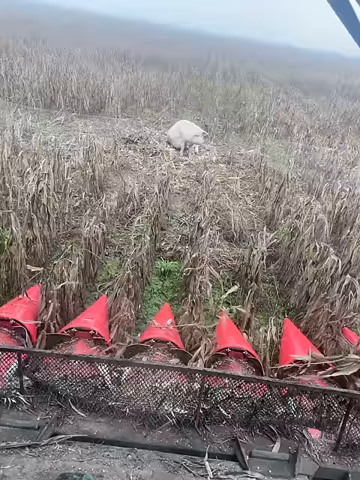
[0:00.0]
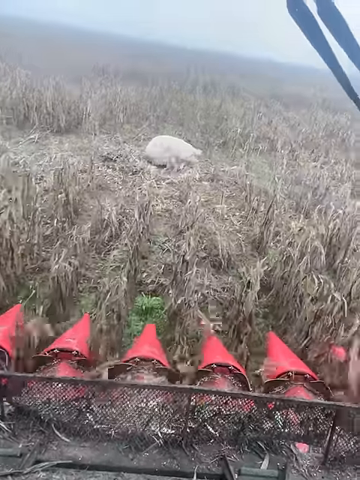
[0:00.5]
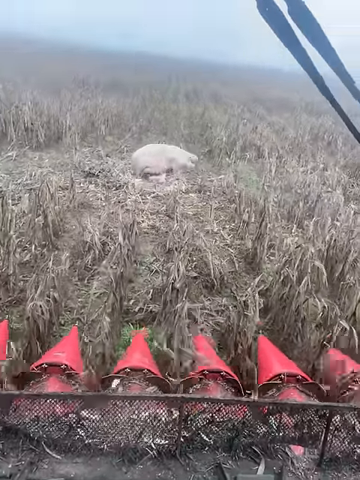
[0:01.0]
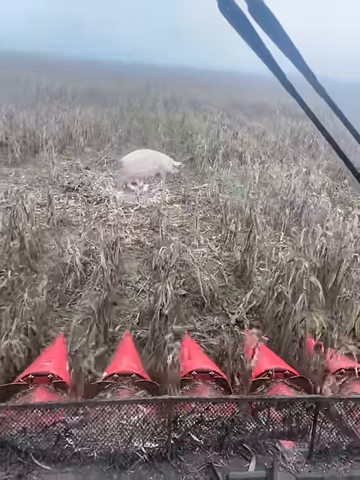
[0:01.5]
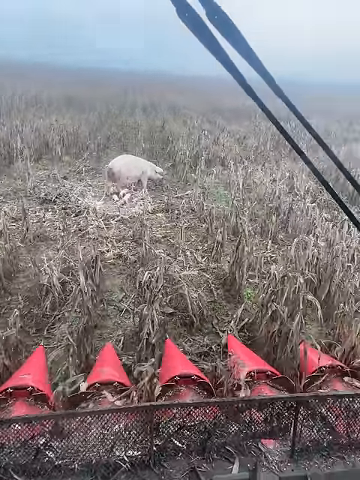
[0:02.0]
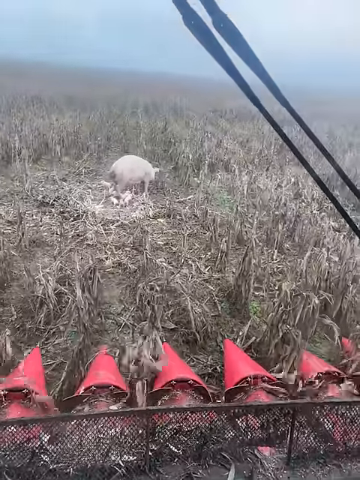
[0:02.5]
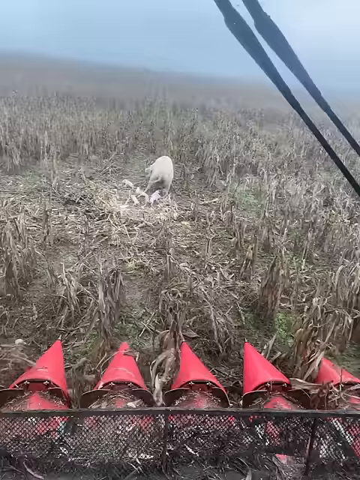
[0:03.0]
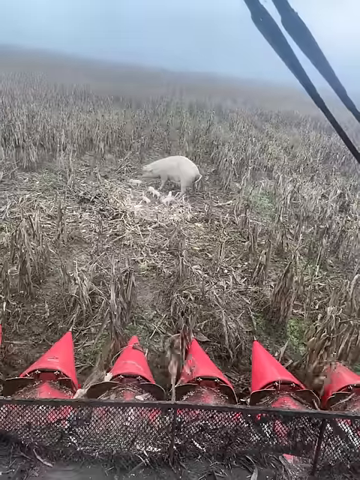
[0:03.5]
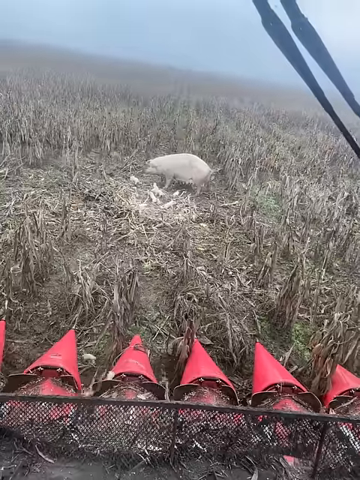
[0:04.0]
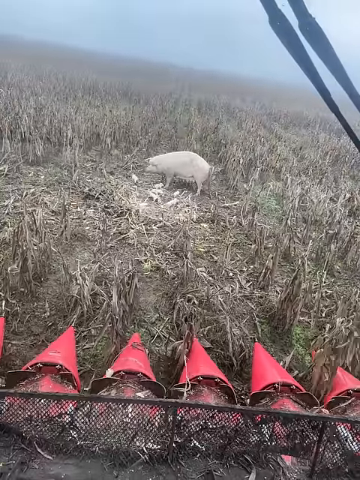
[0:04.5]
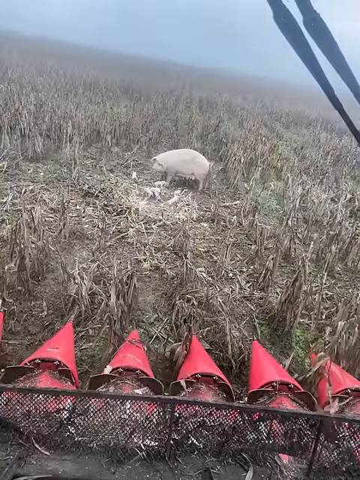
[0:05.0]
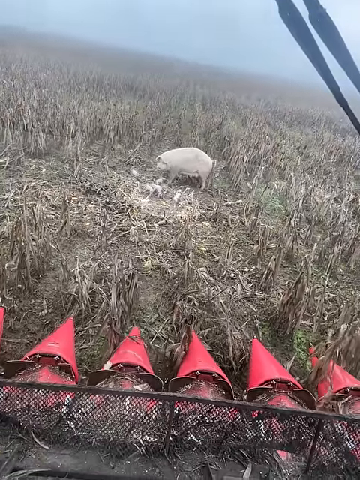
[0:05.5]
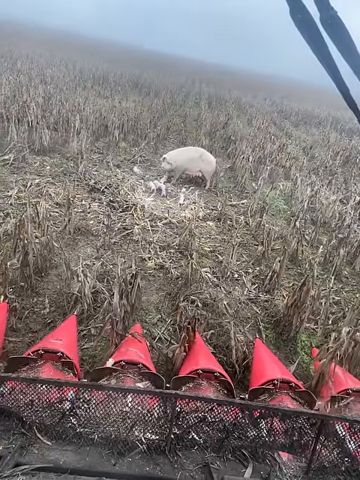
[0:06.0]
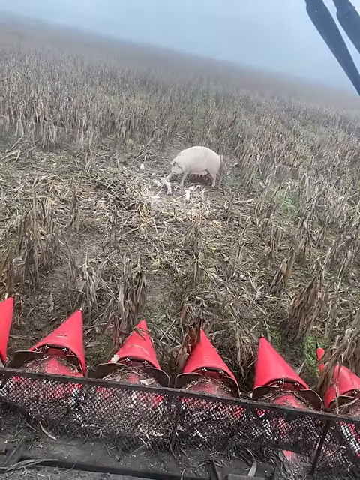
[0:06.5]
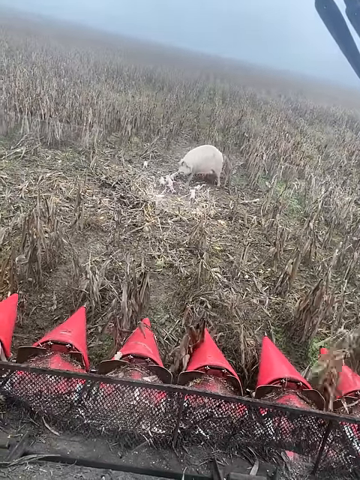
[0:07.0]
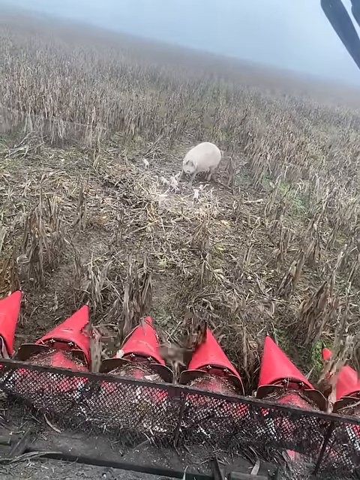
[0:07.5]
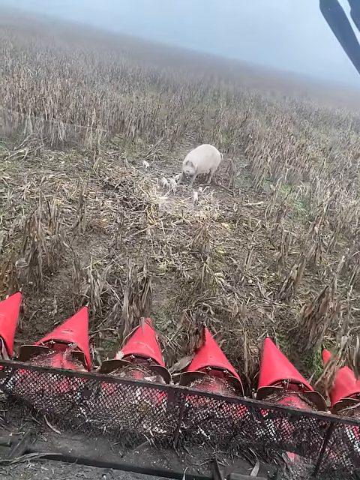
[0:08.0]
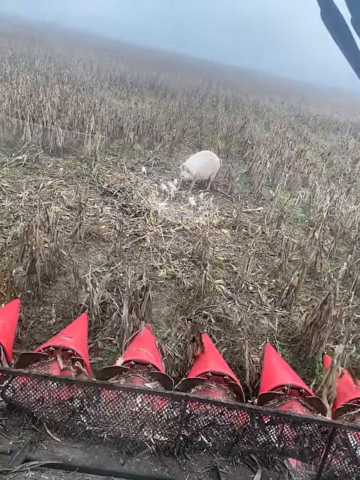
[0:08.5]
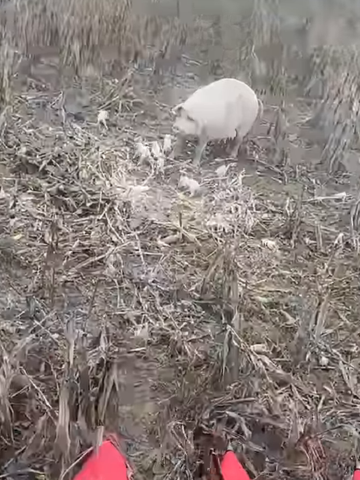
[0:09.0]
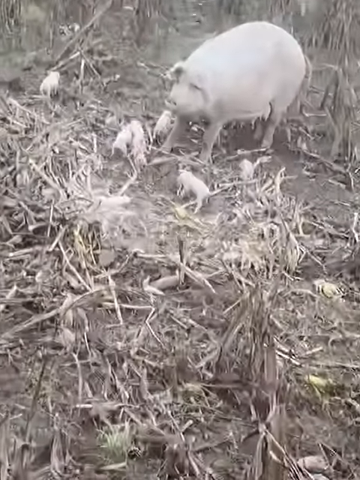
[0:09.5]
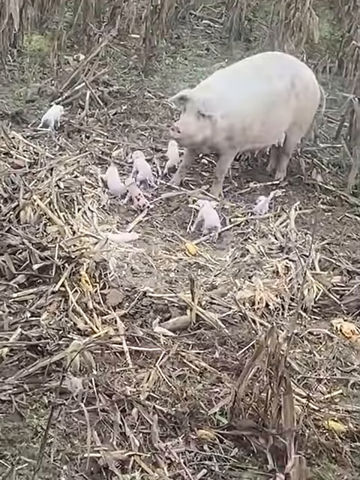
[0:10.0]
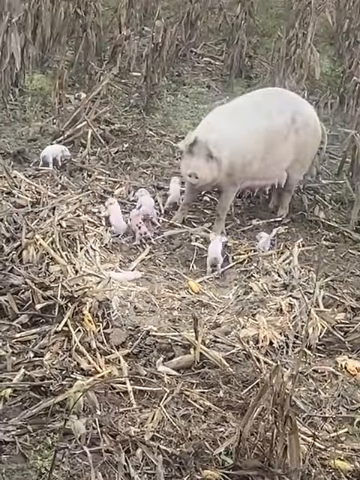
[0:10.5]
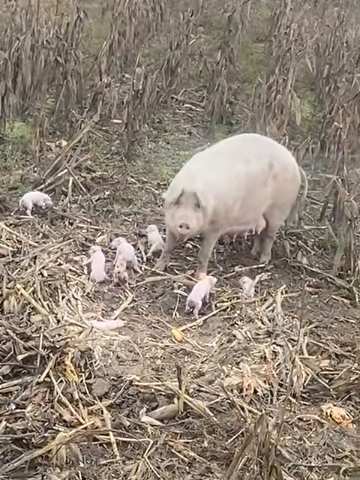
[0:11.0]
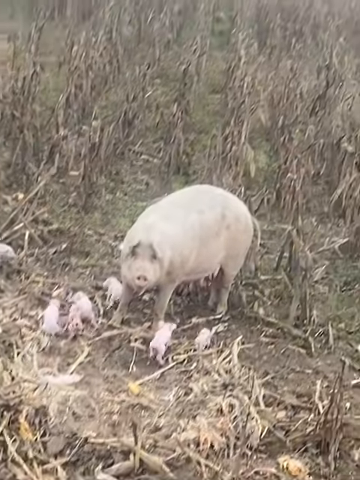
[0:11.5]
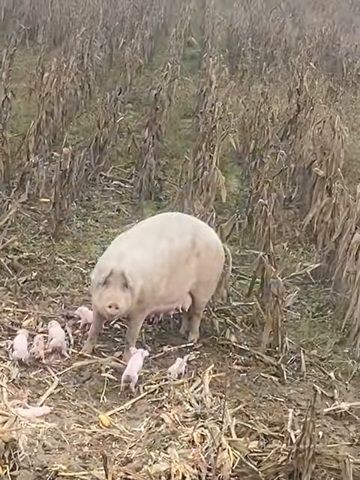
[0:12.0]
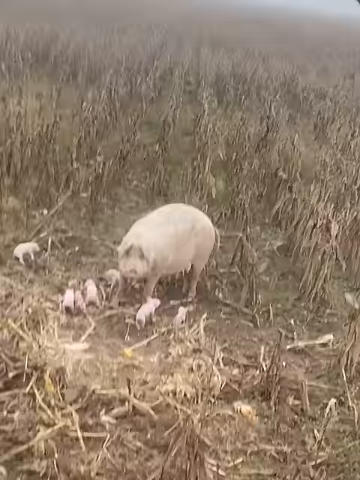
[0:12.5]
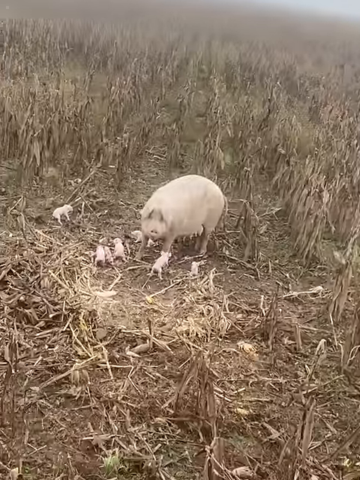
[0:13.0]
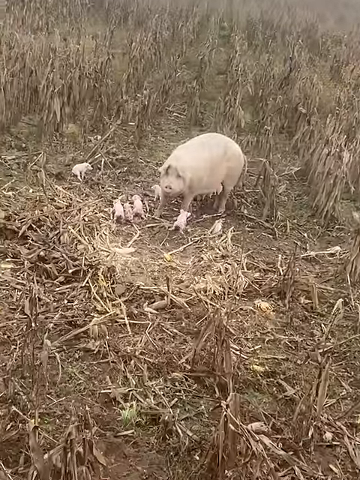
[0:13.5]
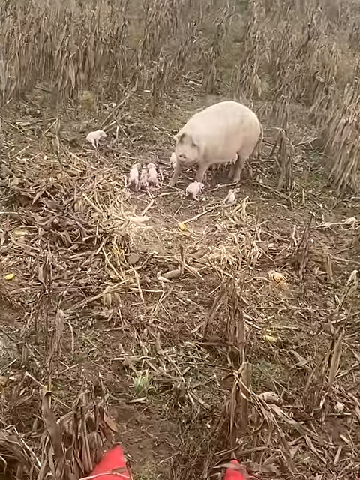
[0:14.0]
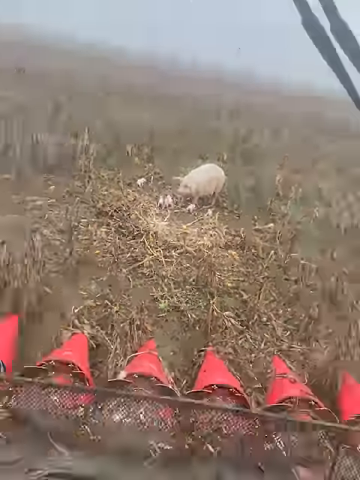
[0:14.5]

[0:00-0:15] From the point of view of a farmer sitting inside a vehicle, grass is being mowed; the farmer himself is not visible. In front of him is a very white pig, with a whole bunch of little baby pigs around her, apparently the mother pig with her piglets. There is one mother pig and approximately seven very small piglets next to her. At the very beginning, red triangles that look like the tops of rockets or something are visible and appear to be cutting the grass; they are seen only briefly as the driver stops for the pig. The person driving the vehicle stops and zooms in on the pig with her piglets. At the very top of the frame the sky is blue, and in the top right-hand corner there are two black lines that appear to be either some cords or windshield wipers.